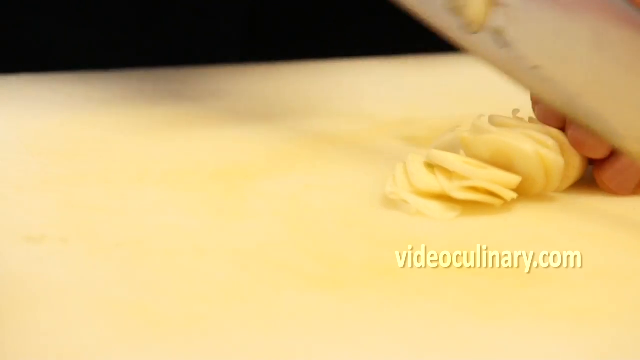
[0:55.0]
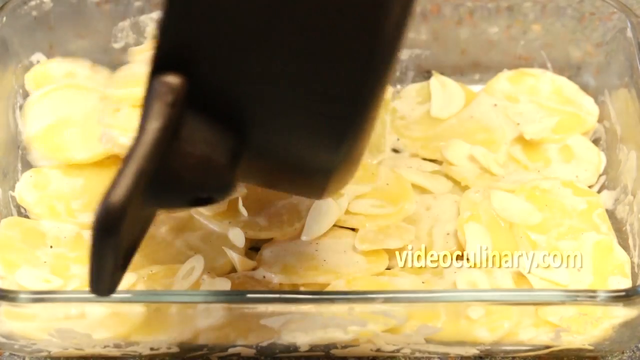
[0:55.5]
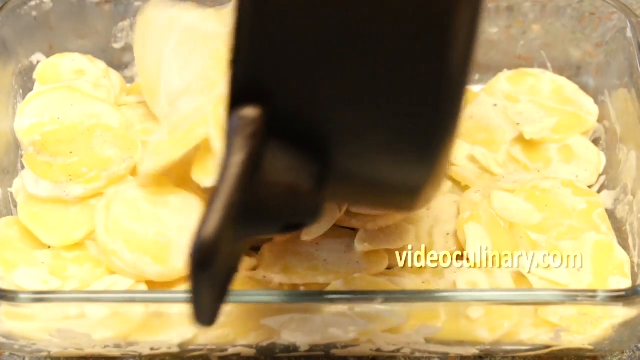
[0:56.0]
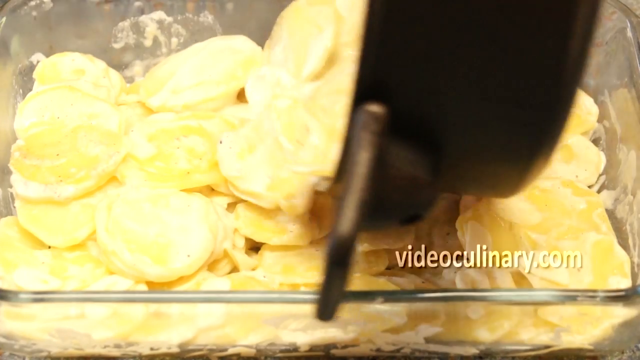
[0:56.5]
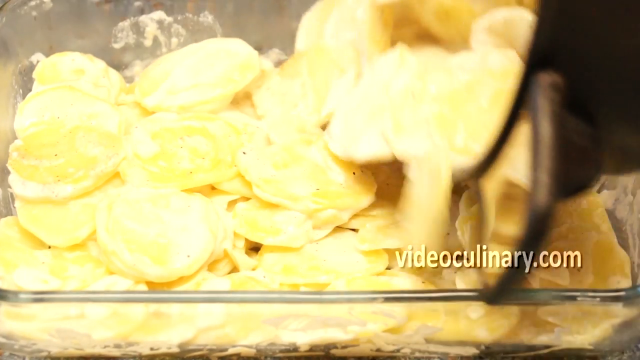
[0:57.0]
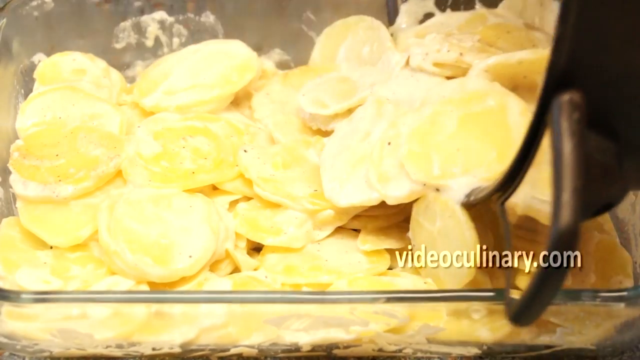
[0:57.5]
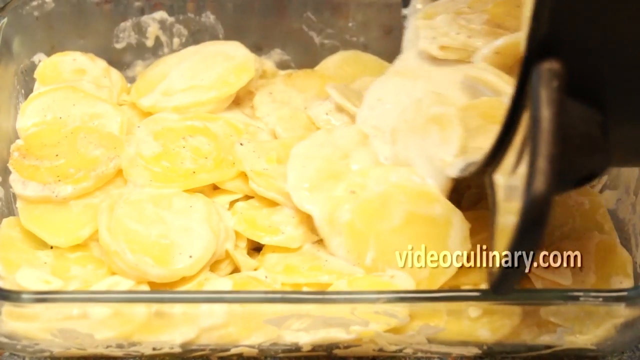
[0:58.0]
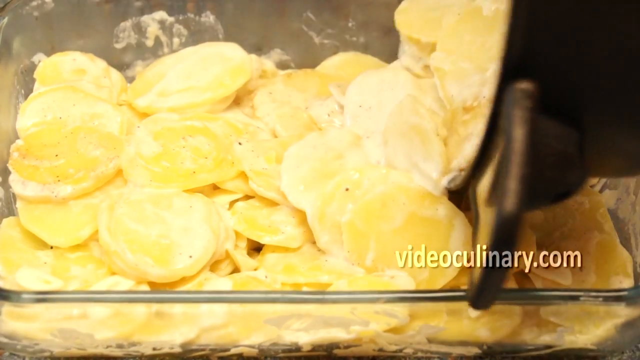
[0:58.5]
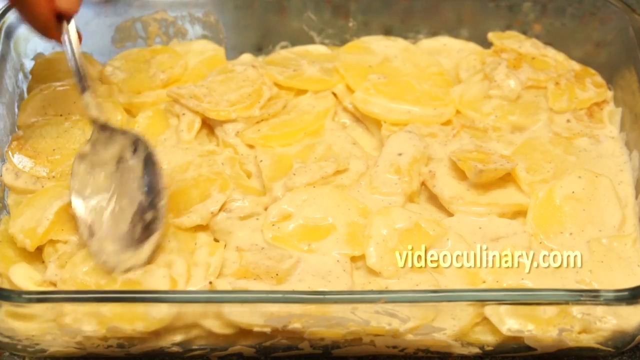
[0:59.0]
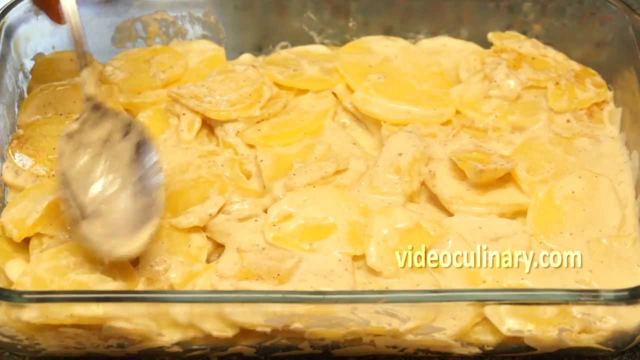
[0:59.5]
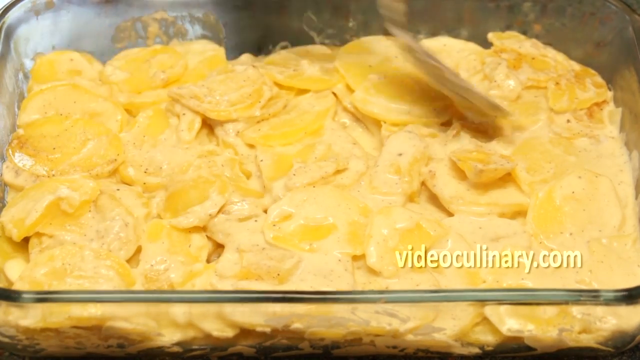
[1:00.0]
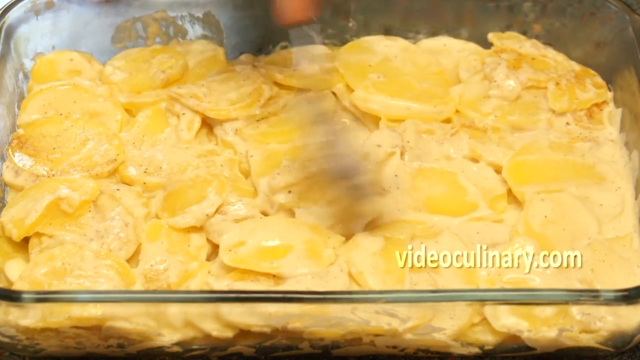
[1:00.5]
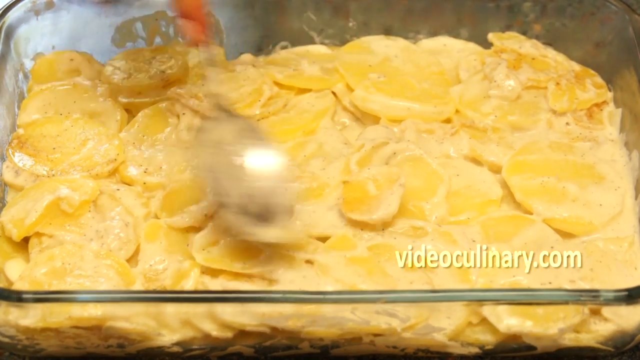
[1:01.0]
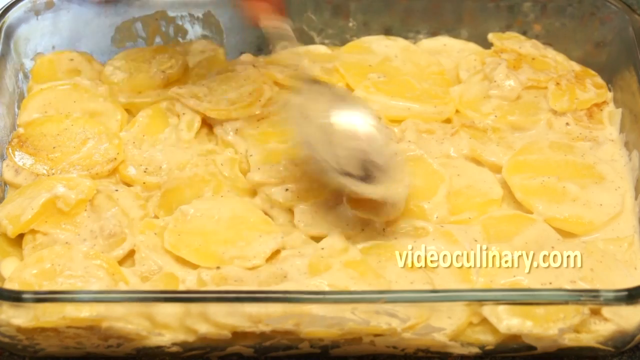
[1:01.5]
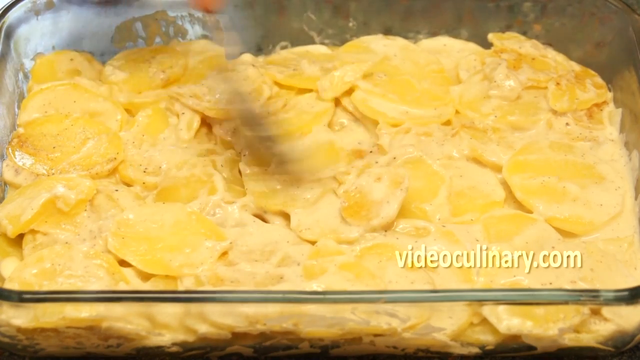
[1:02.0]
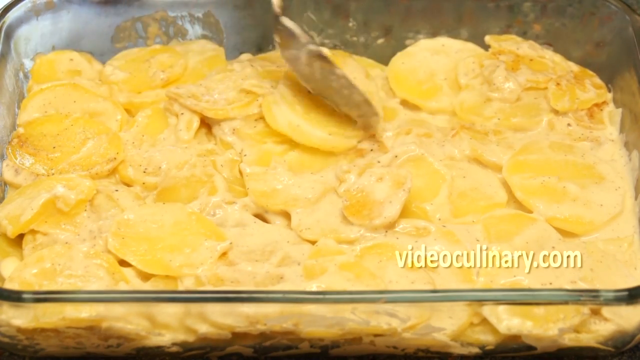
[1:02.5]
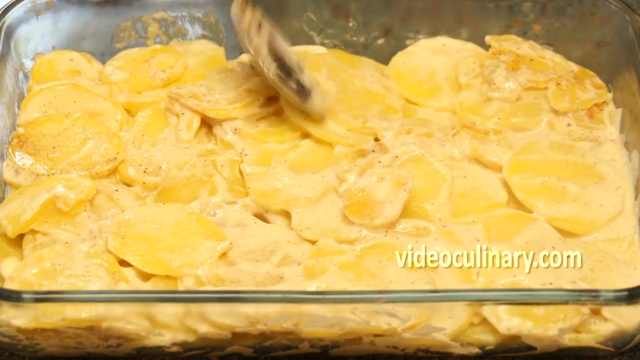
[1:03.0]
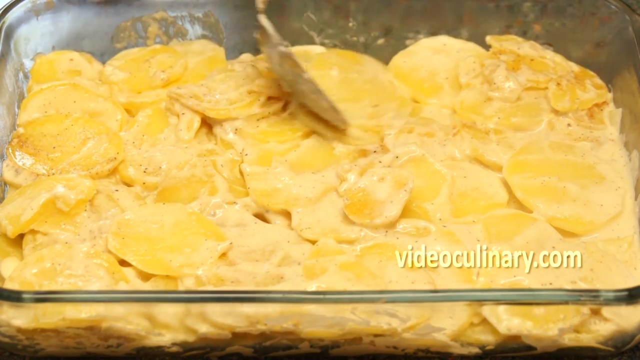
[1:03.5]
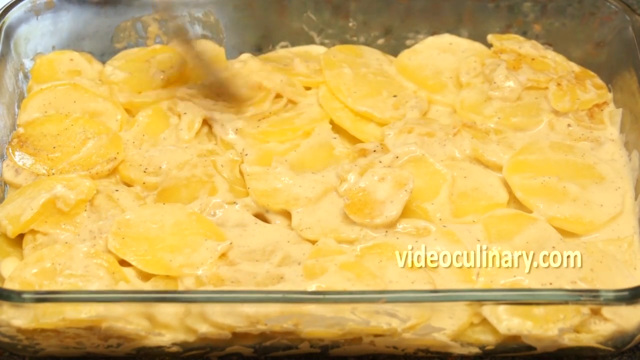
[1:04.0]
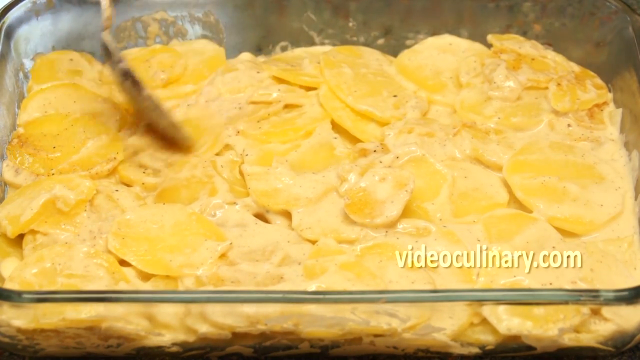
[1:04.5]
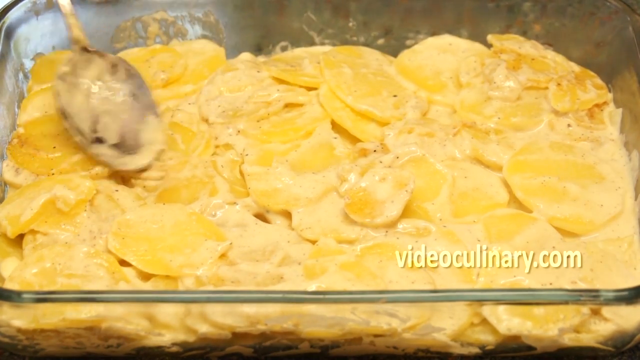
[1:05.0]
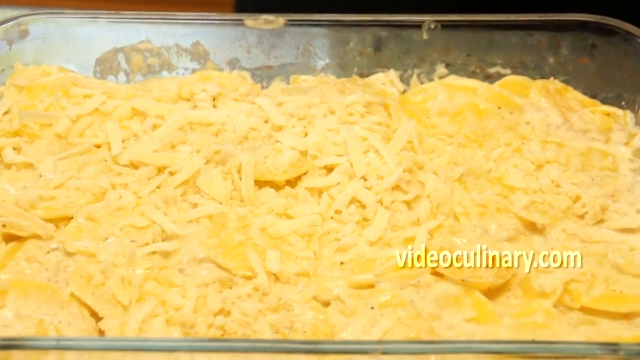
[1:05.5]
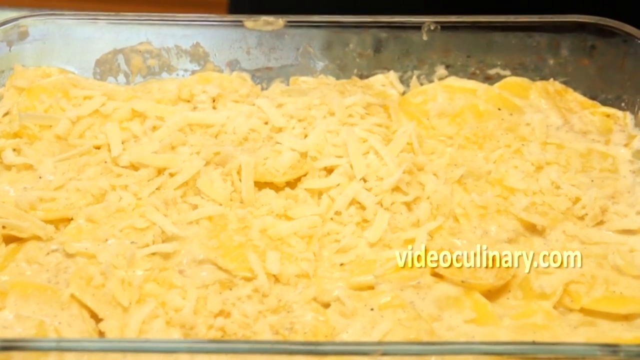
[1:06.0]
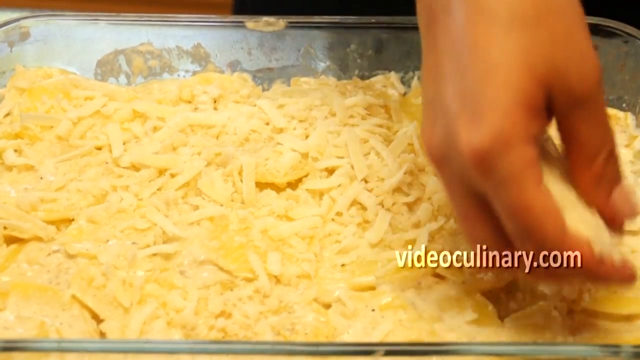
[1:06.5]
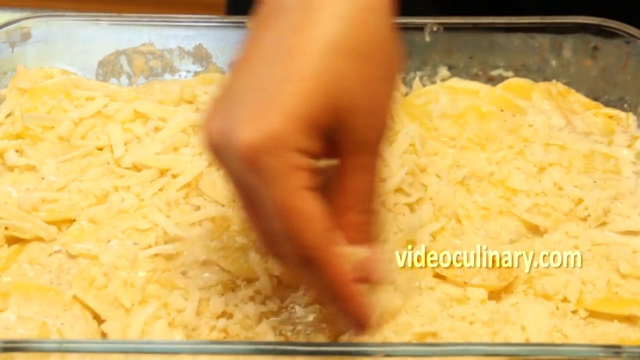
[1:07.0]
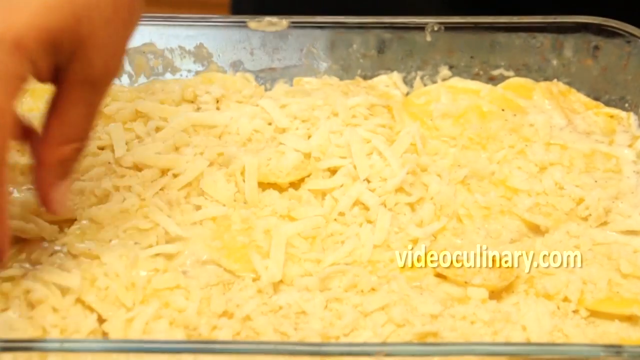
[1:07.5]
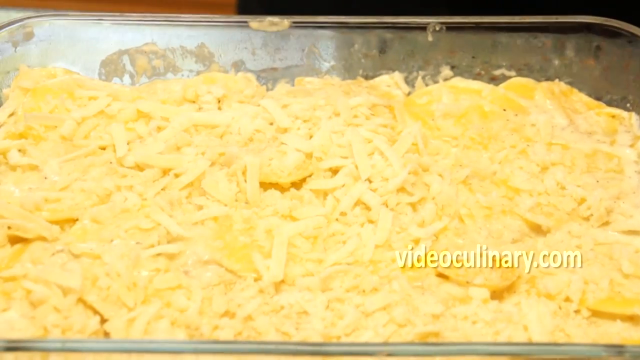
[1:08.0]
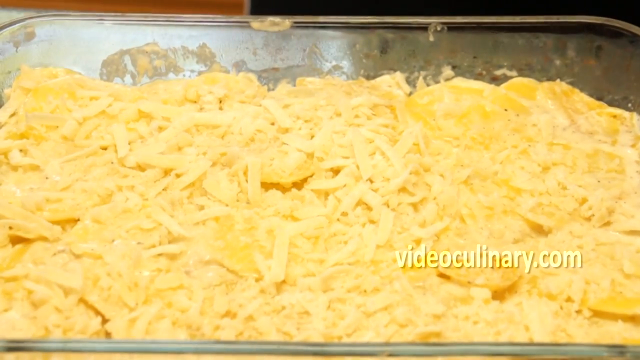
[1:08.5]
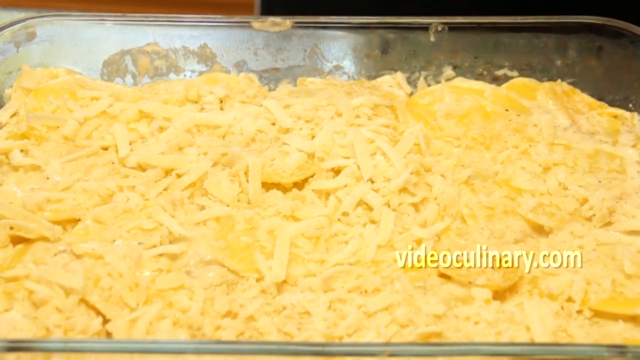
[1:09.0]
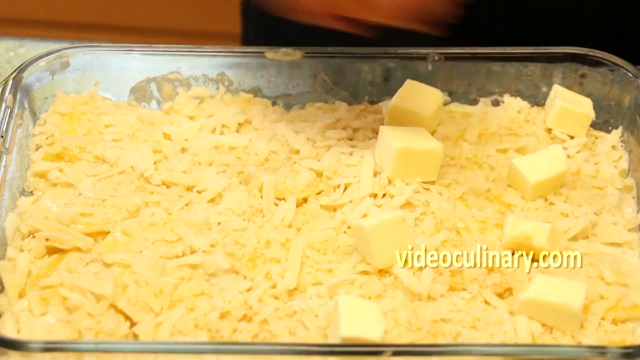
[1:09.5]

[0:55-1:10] Potato gratin is poured from the black pot into a rectangular glass bowl. A spoon moves the potatoes around in the bowl, shaping them. The shot cuts to cheese on top of the potatoes in the bowl, apparently a white cheddar or mozzarella-type cheese. Another hand puts more of the mozzarella into the bowl, especially toward the bottom of the bowl, and a hand on the right side appears to put a little more cheese into that corner.